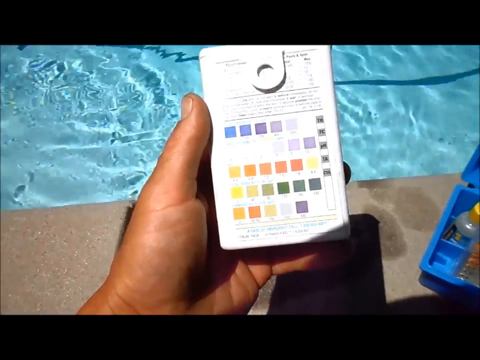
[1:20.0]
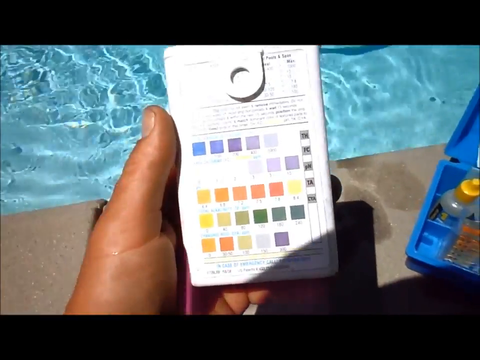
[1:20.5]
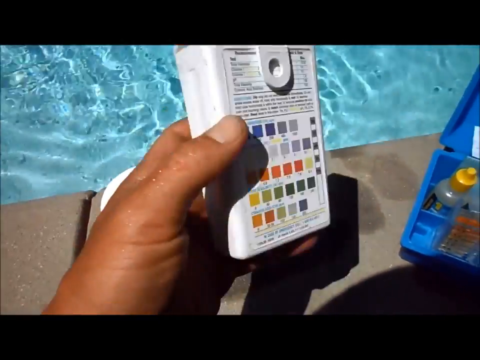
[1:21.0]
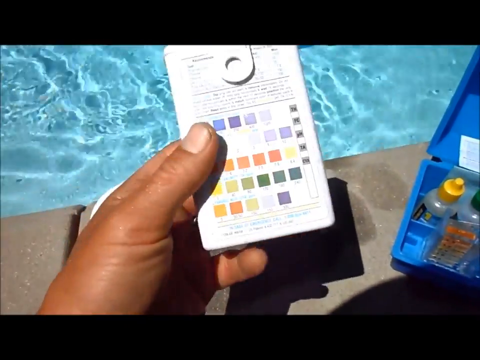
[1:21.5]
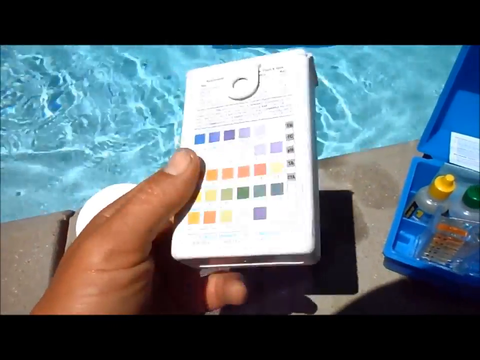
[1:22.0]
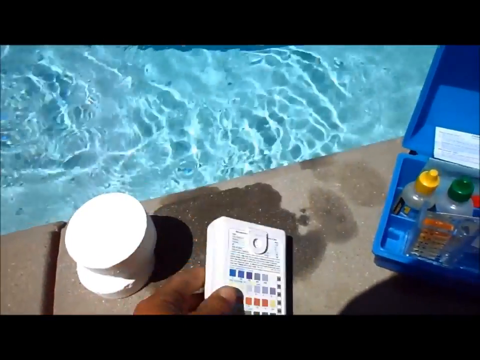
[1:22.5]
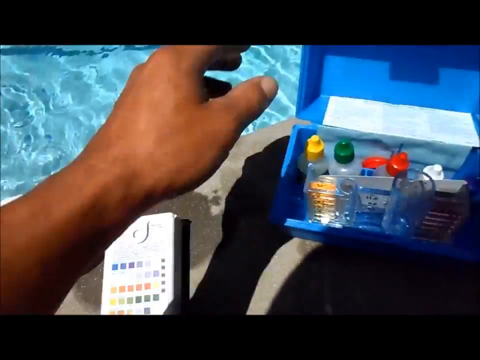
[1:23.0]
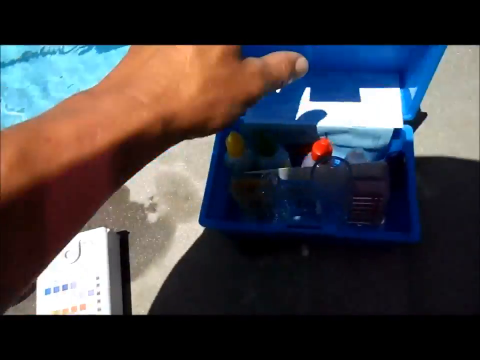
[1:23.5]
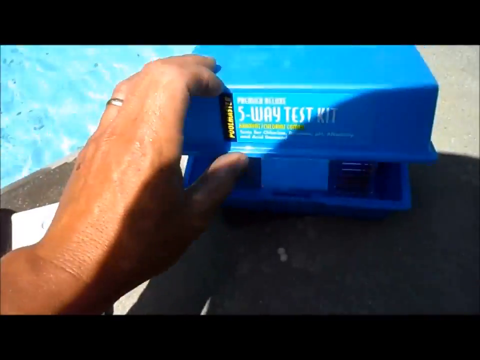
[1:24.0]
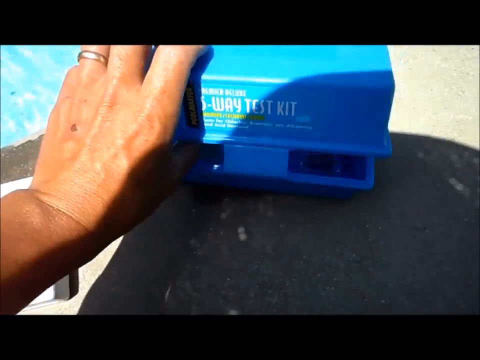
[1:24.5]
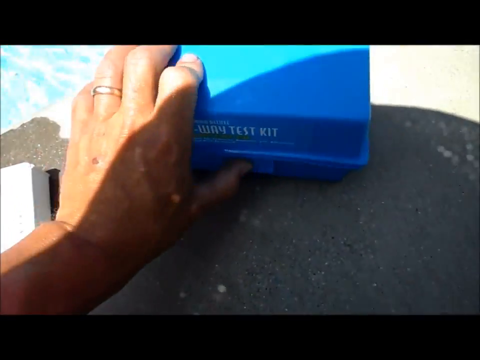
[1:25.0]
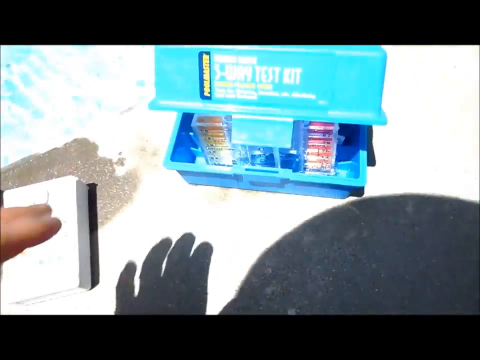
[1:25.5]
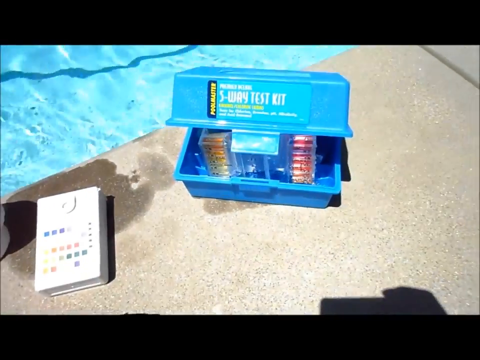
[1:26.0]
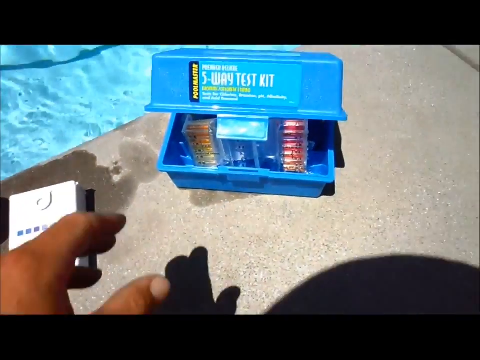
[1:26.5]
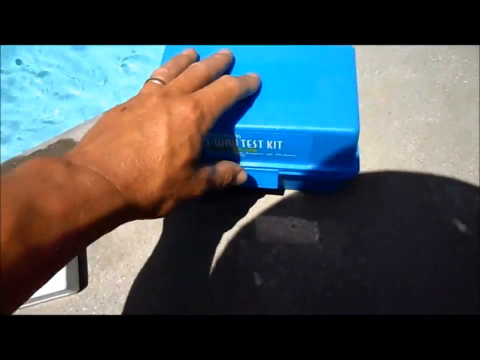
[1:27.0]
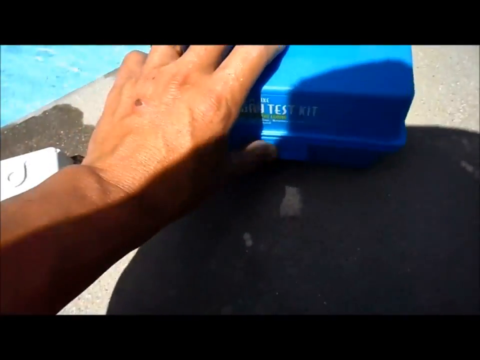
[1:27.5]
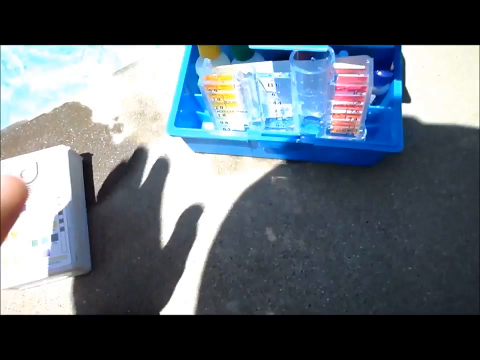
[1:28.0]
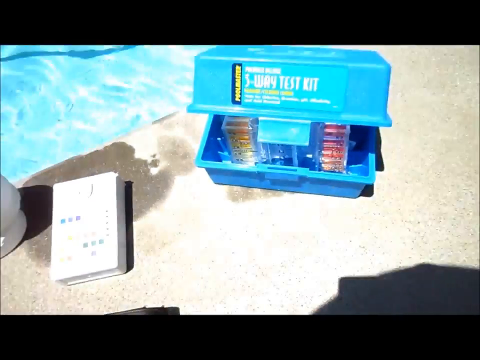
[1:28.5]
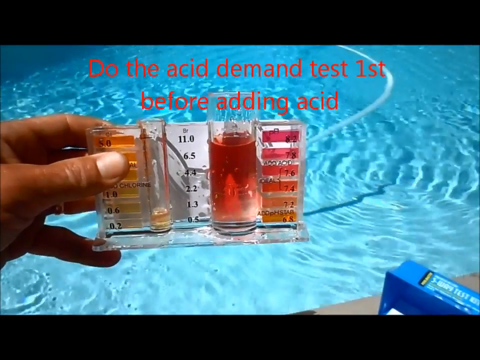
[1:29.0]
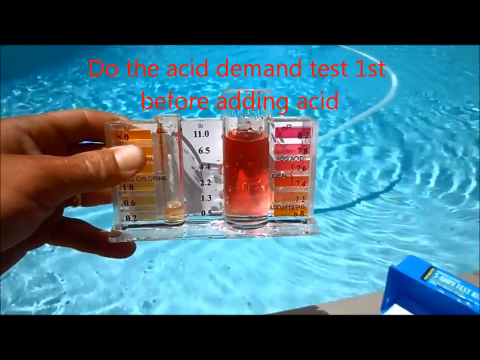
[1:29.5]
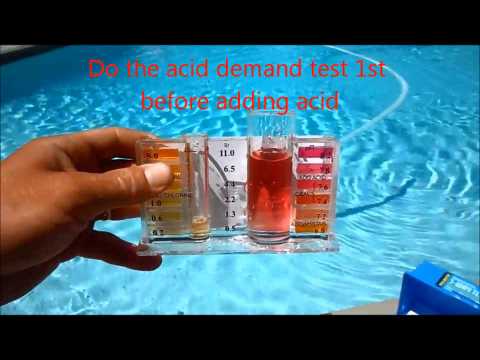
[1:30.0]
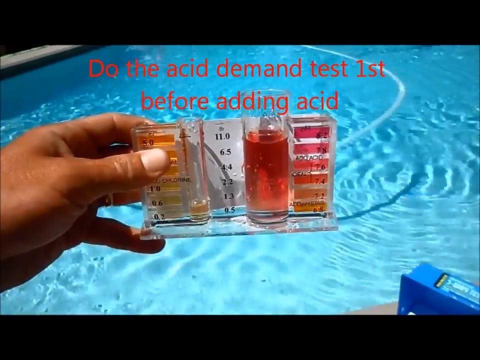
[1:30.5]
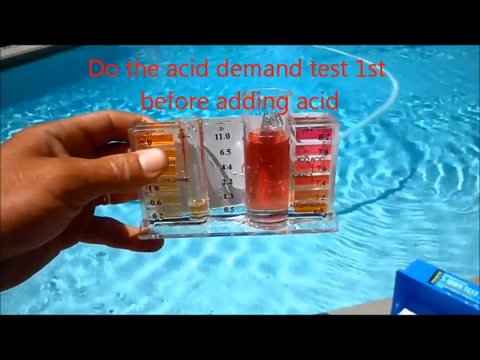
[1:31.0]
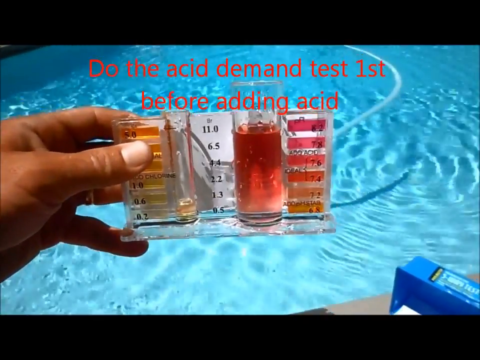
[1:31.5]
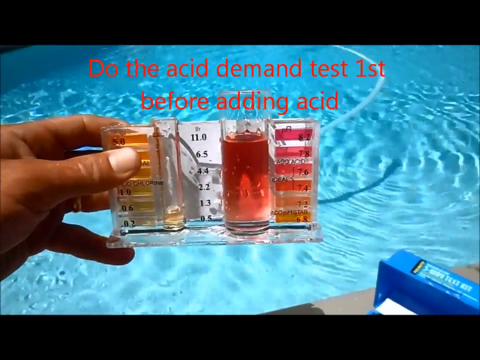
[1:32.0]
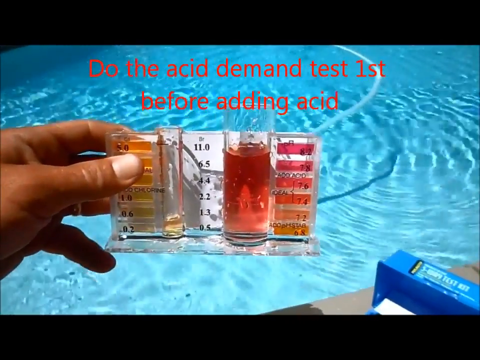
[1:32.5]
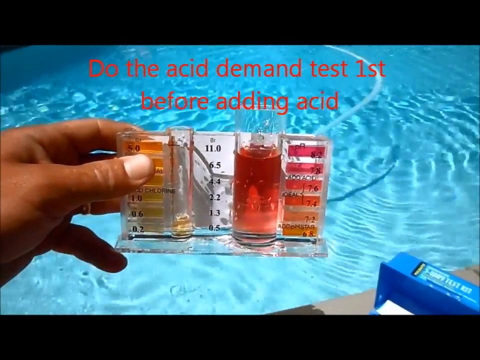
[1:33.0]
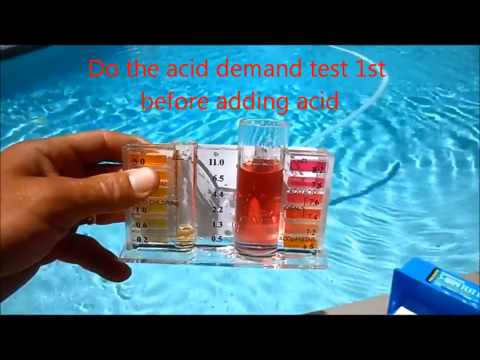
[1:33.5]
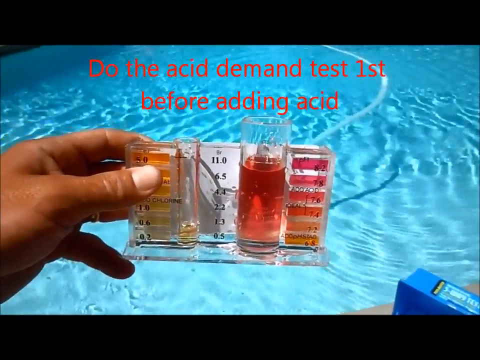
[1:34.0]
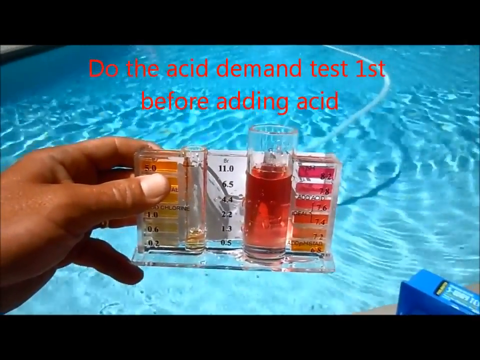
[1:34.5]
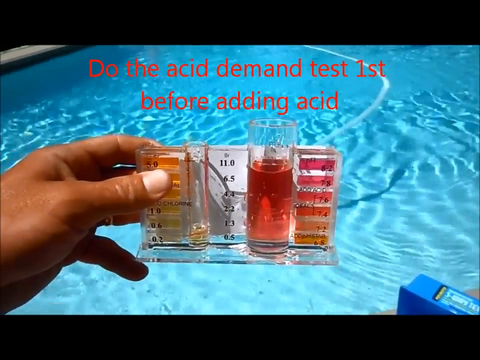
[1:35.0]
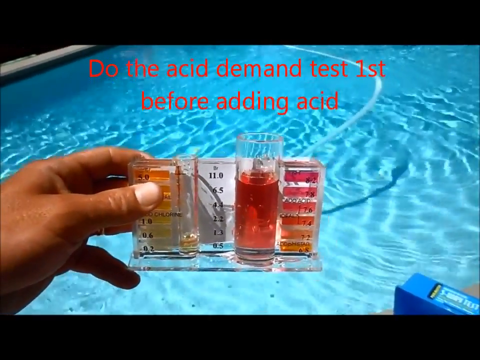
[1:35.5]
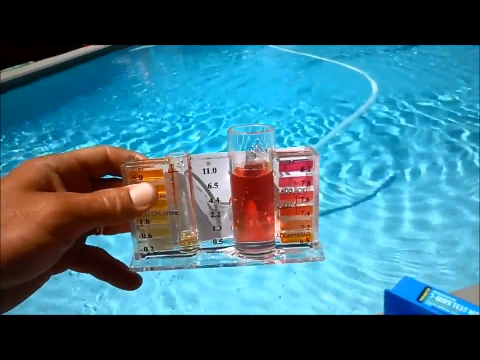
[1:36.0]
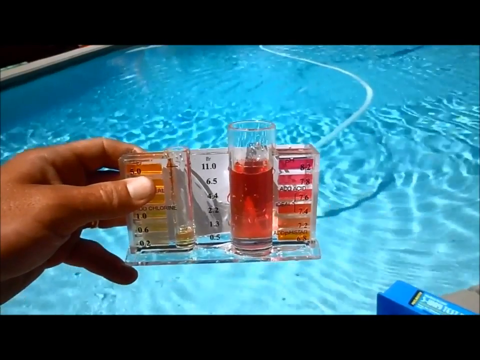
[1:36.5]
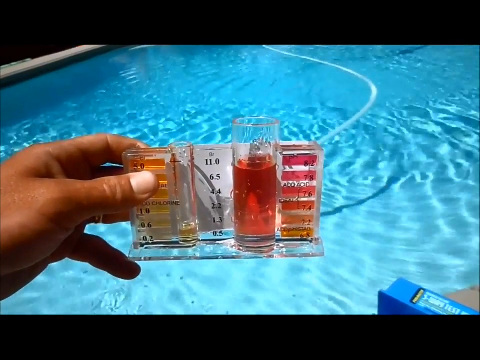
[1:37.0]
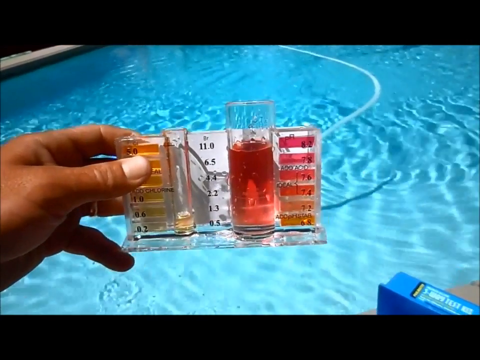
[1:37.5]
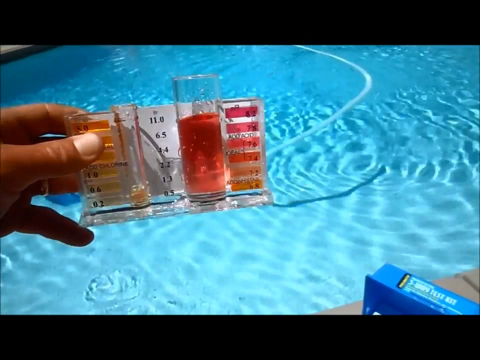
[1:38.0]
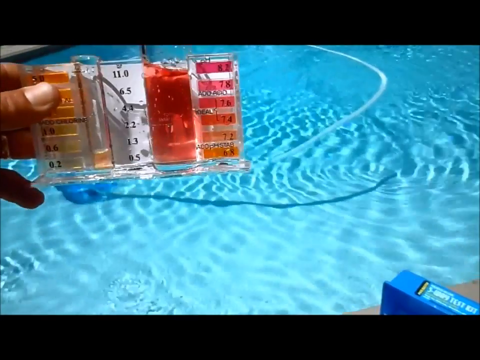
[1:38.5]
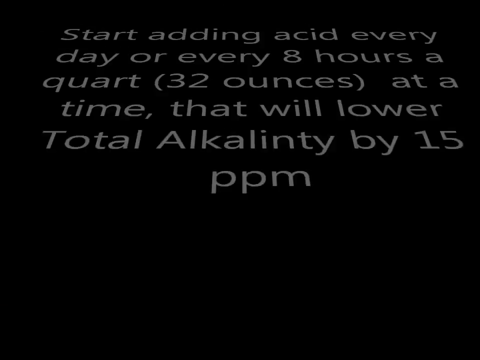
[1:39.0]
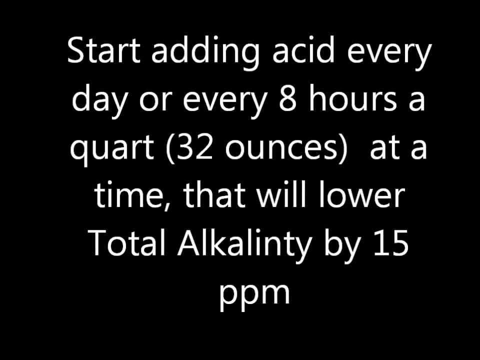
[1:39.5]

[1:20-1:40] The man holds a white box with numerous rows of little colored boxes, a testing kit for the pool, showing its front to the camera. After he puts it down, the camera pans over to the blue box of bottles. He tries to shut the box a couple of times, but the lid pops open each time, and the camera pans away. A couple of the bottles are visible, more of the kit can be seen, and its front reads "five-way test kit". The video then cuts to him holding the tester with the liquid inside, now red, comparing it to the different strips to the right and left on the kit to see where the acidity is. Red text about doing the acid demand test first before adding acid appears, followed by a black screen with white writing.